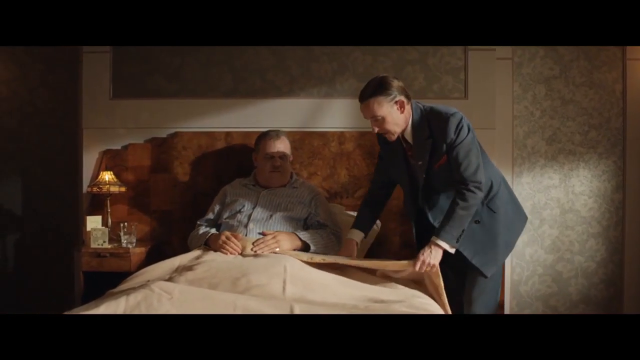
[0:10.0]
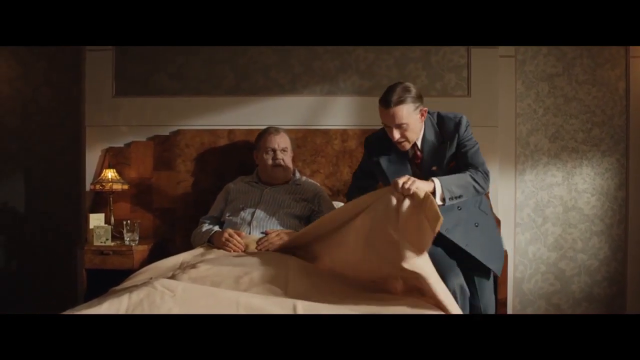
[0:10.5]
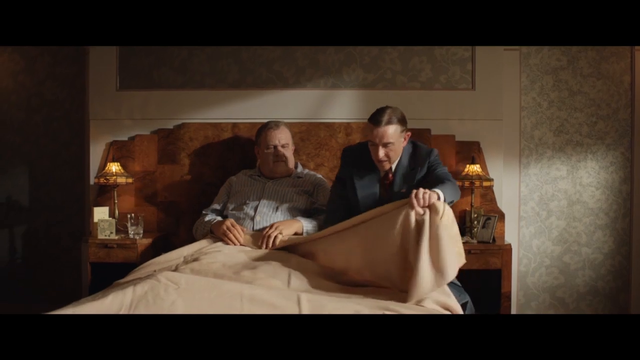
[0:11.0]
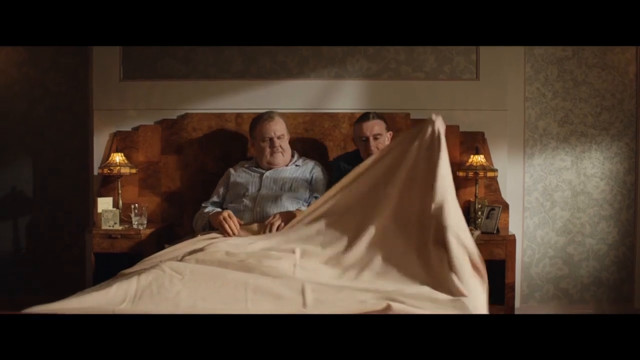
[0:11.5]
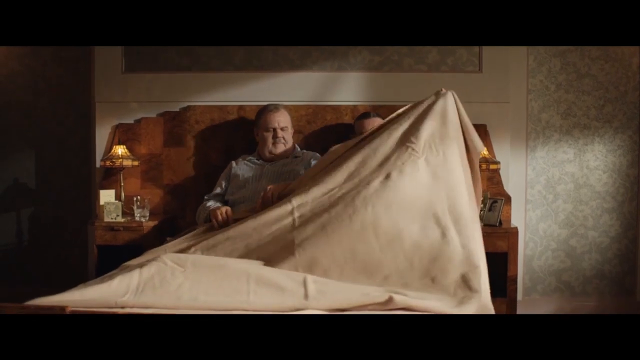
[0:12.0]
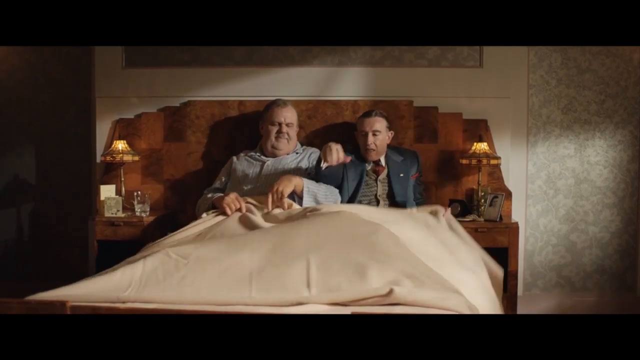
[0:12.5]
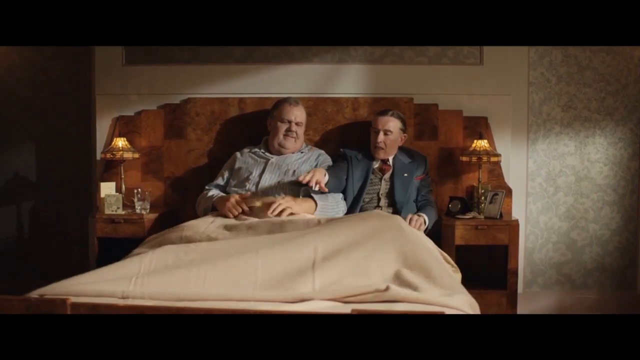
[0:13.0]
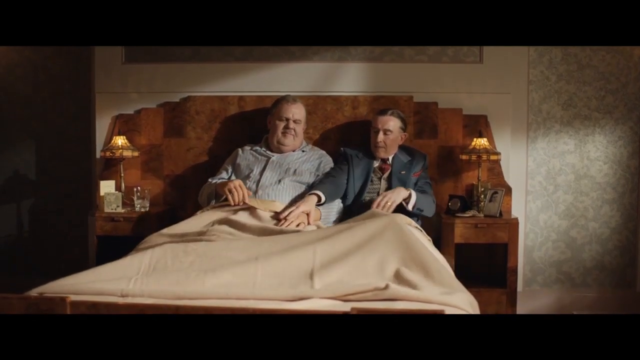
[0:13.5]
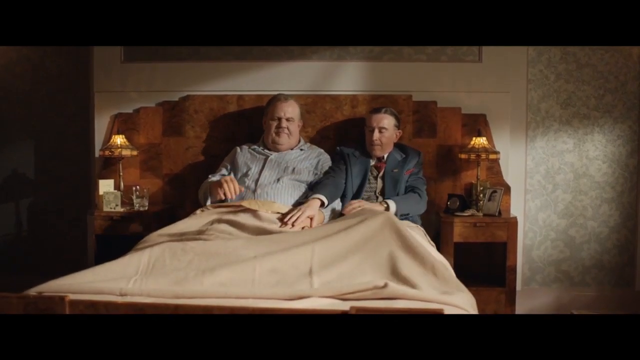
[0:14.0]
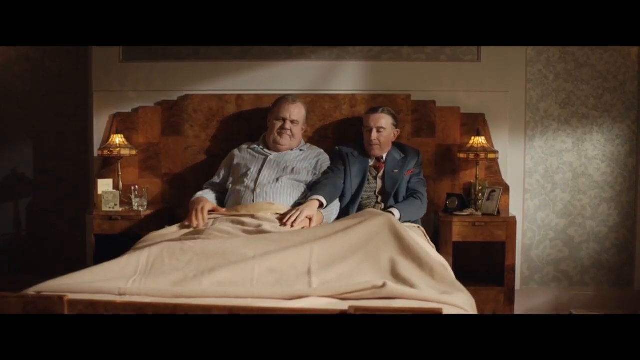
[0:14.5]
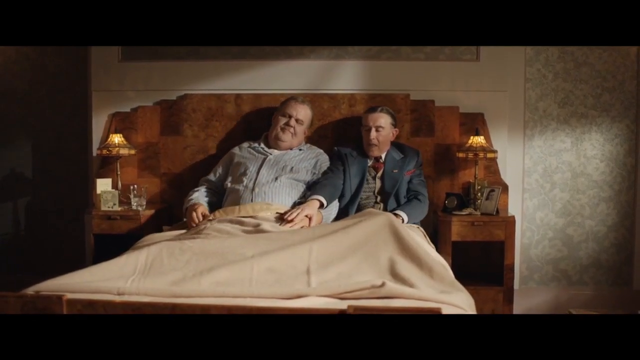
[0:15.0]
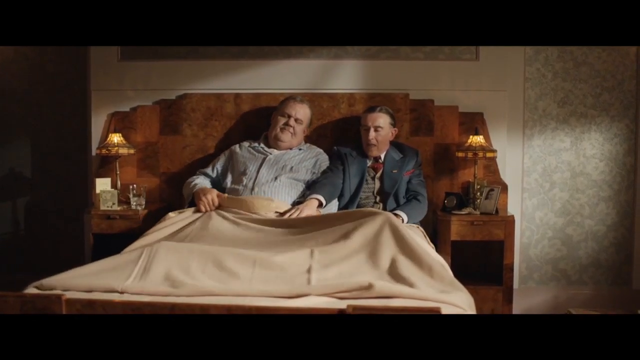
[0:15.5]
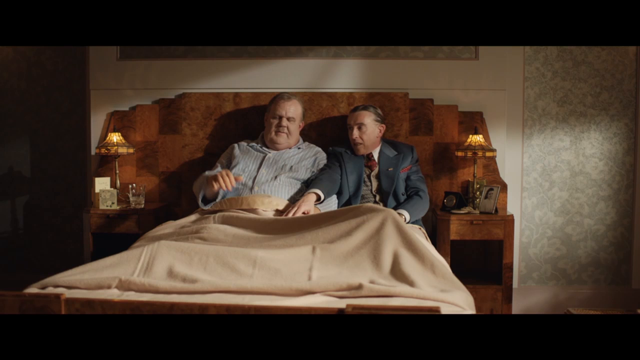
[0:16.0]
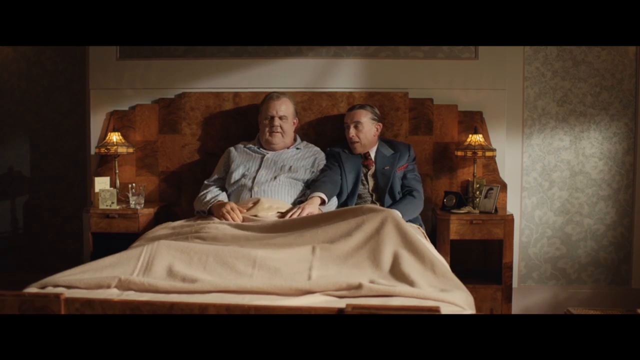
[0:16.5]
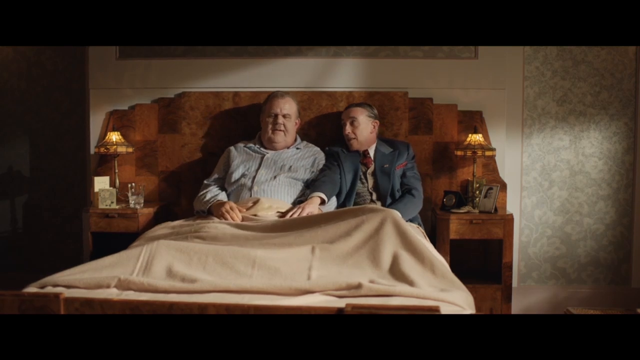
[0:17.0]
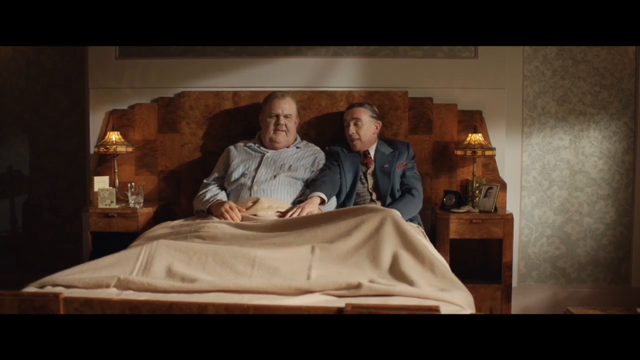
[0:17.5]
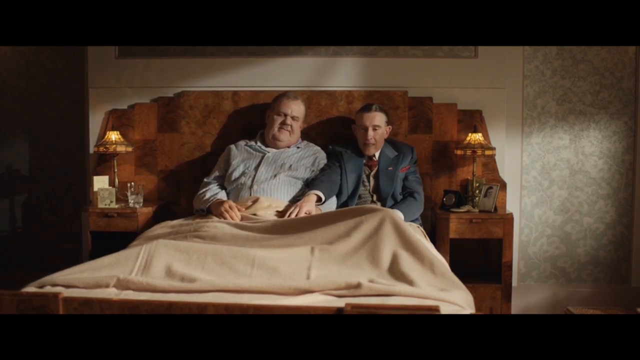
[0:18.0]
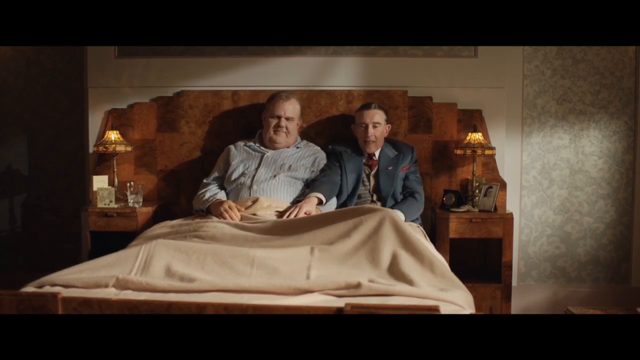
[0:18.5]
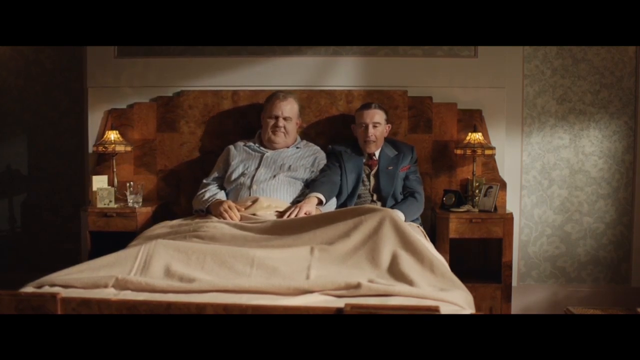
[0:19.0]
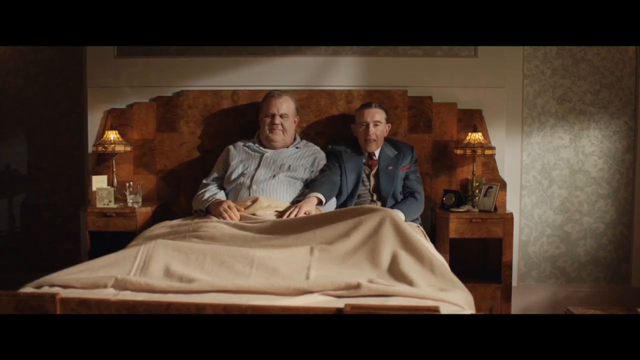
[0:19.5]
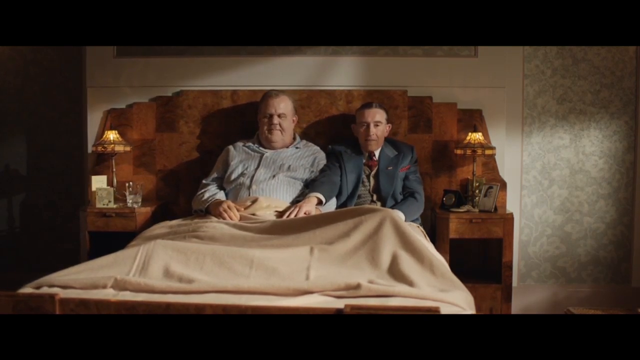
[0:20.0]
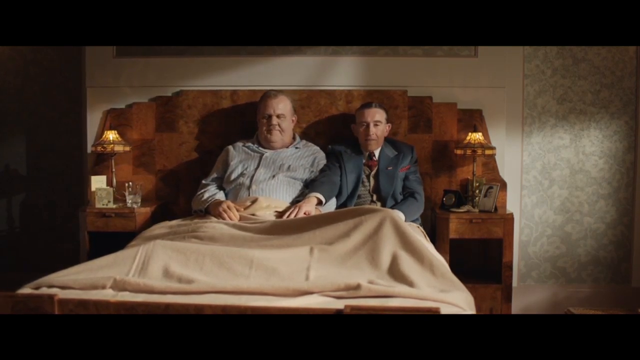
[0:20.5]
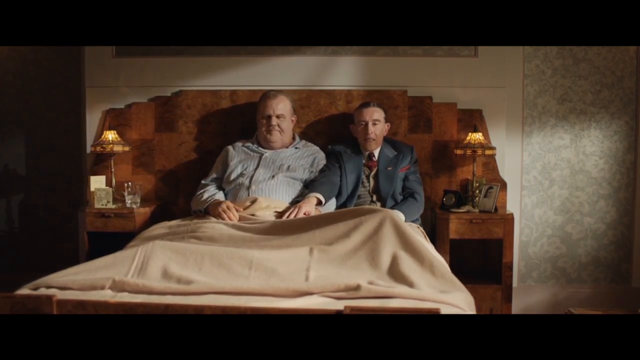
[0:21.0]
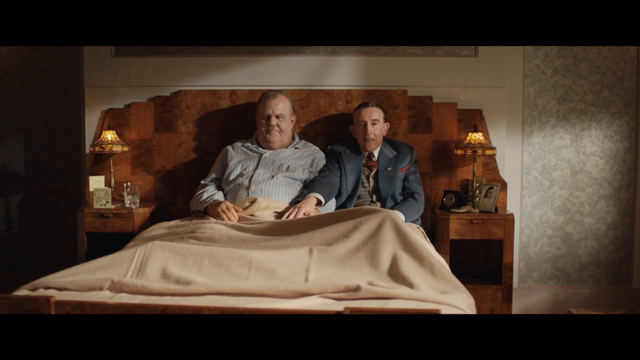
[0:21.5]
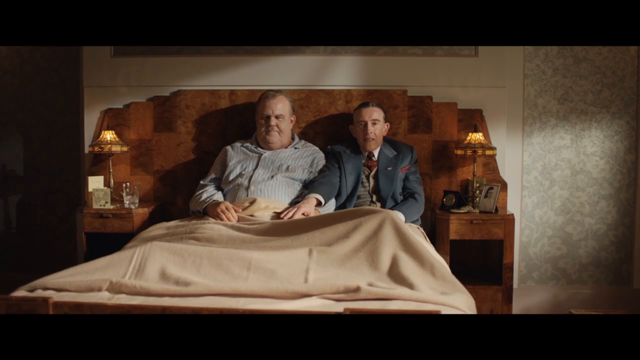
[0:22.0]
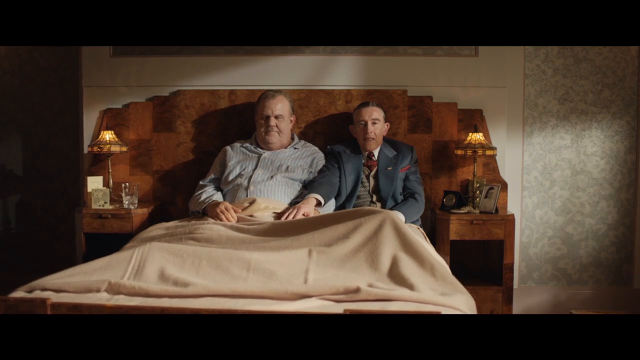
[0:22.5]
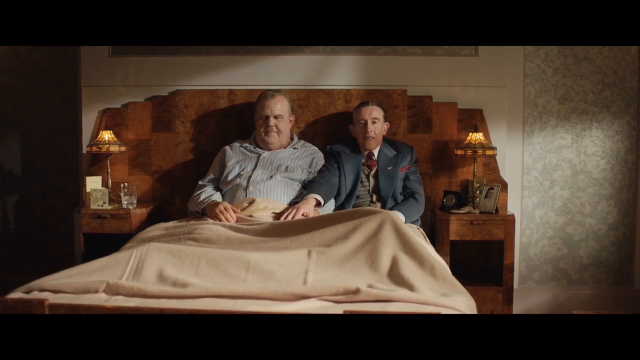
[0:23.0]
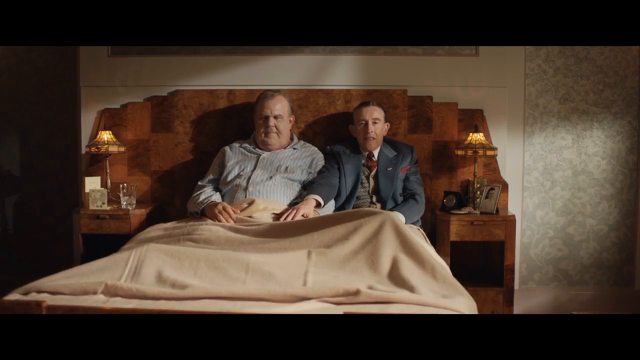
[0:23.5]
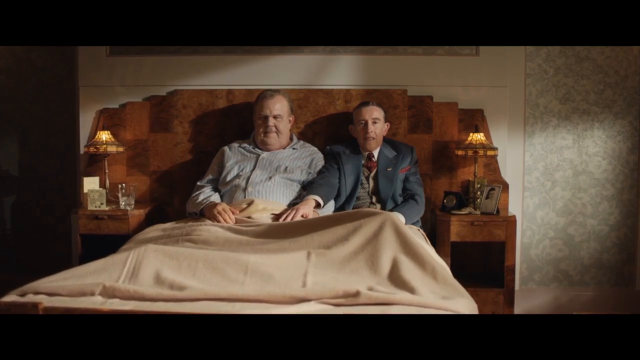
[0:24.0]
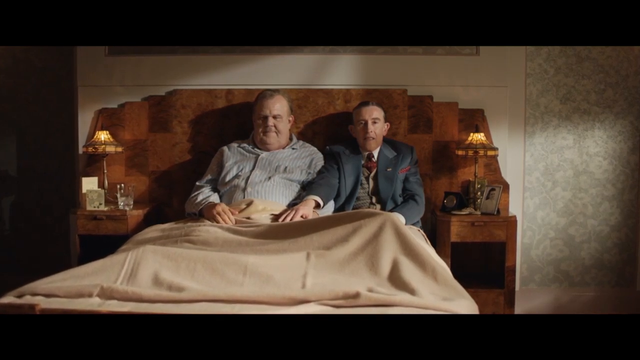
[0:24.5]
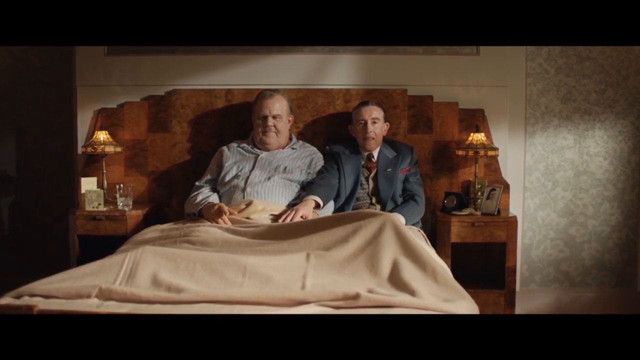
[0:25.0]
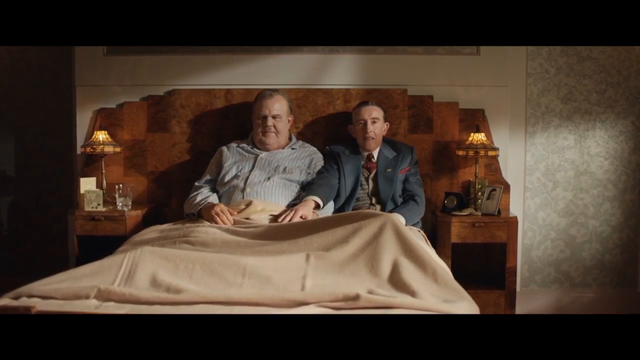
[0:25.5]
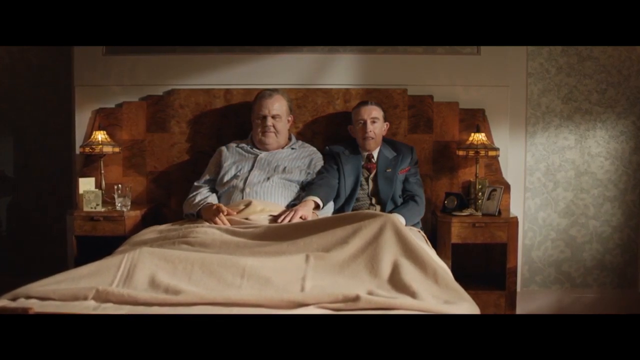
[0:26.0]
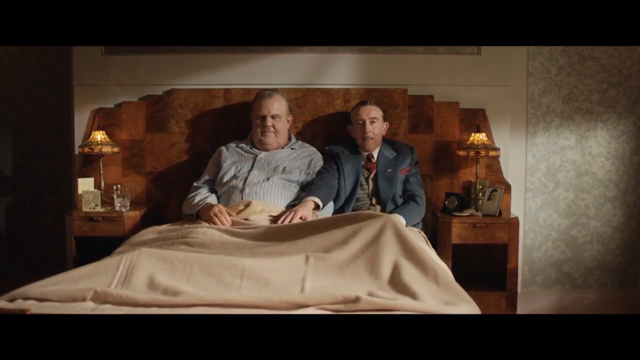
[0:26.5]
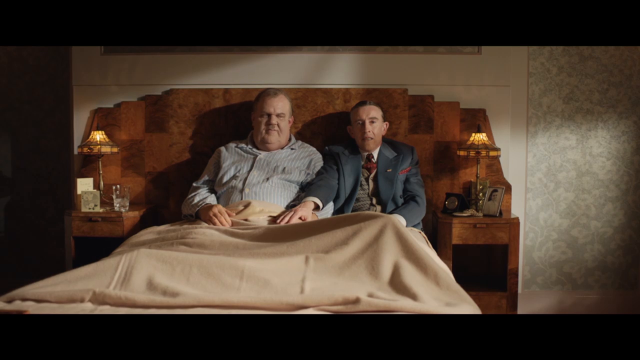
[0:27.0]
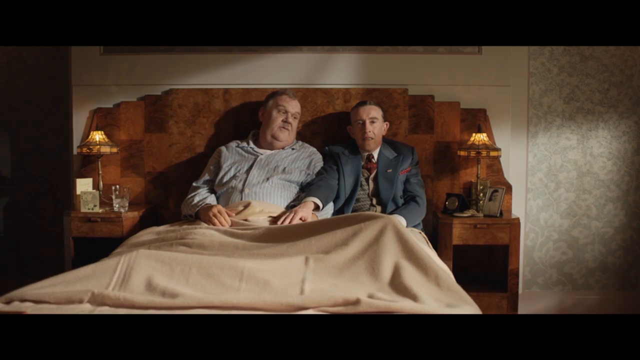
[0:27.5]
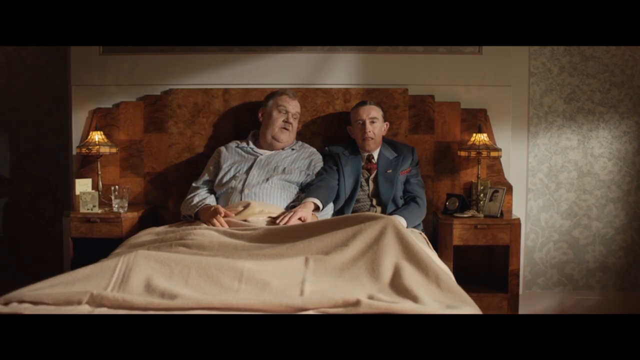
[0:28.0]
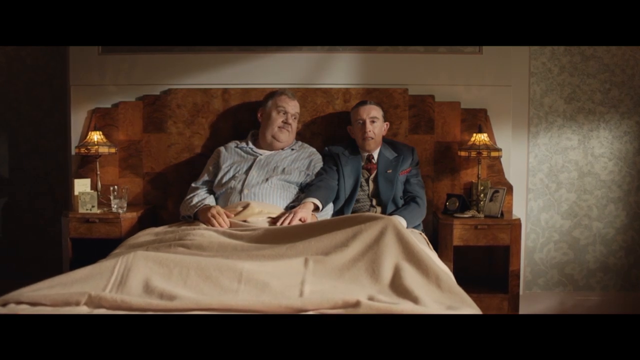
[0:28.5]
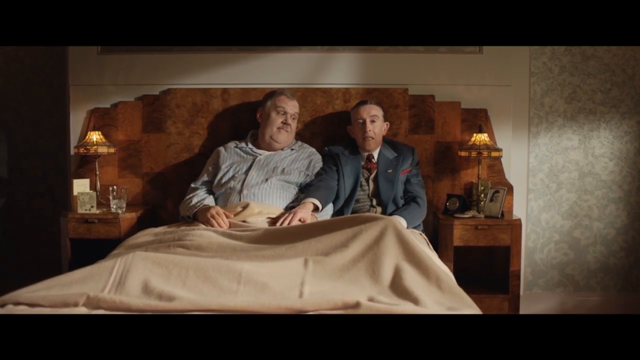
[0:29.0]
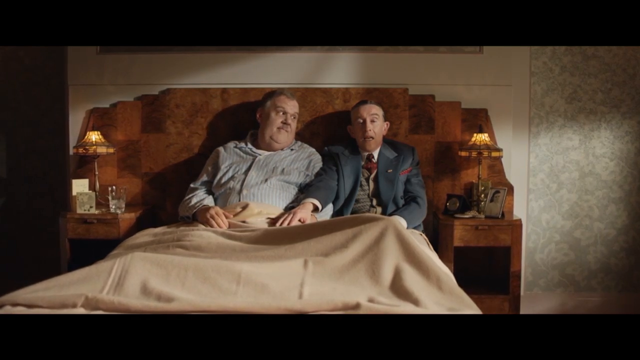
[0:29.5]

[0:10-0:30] The thin middle-aged man in a grey suit and red tie lifts the blanket and gets under it with the heavyset middle-aged man. He reaches out his right hand and places it on top of the heavyset man's left hand. On the nightstand next to the heavyset man is a clear glass about 8 inches tall, half filled with a clear liquid. On the nightstand next to the thin man is what appears to be a black table clock and a silver picture frame with an image of a young woman. The middle-aged man reaches up with his right hand and places it back on his lap. The thin man looks at the heavyset man, who nods his head forward as if contented. Both men look forward toward the camera. The heavyset man lifts his pointer and middle fingers twice, tapping them on the blanket, then looks to his left at the face of the thin man, who is still looking forward toward the camera.